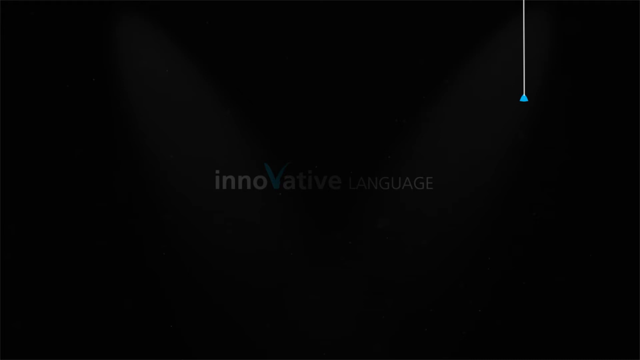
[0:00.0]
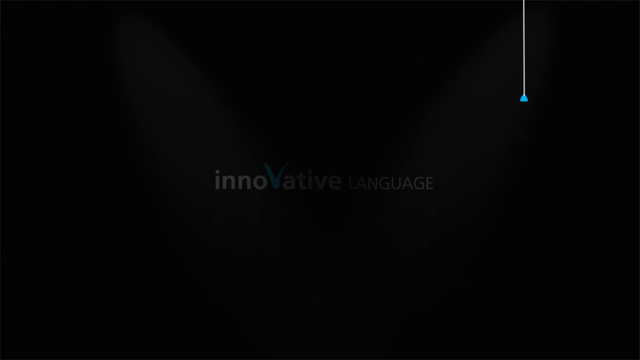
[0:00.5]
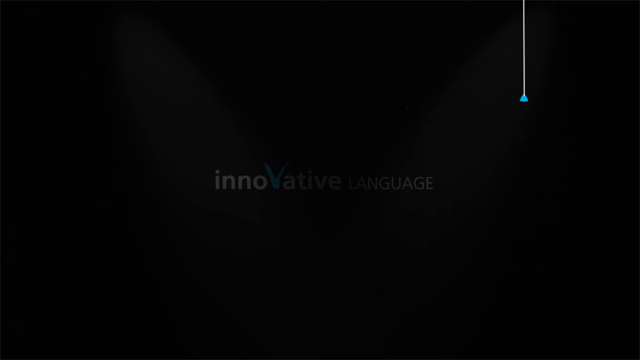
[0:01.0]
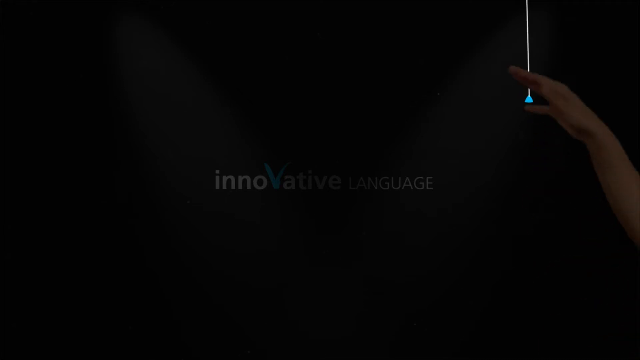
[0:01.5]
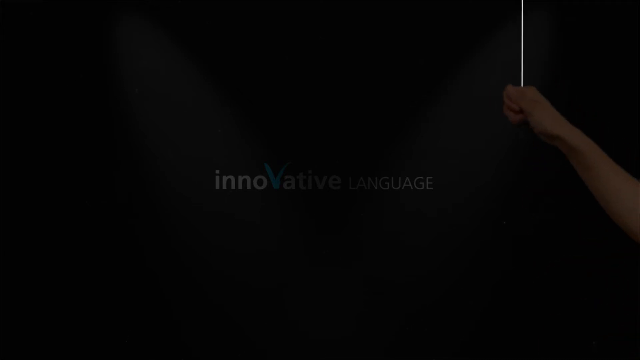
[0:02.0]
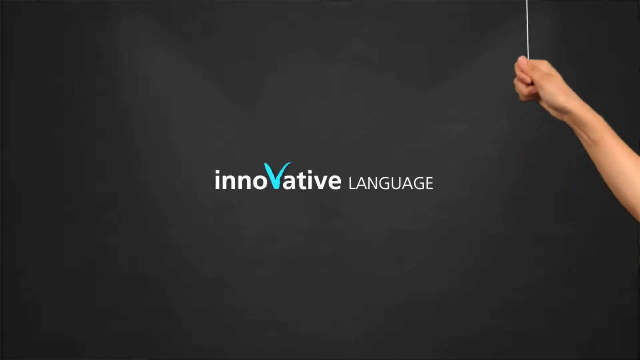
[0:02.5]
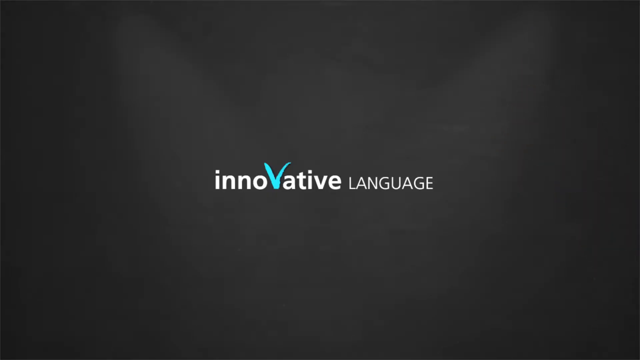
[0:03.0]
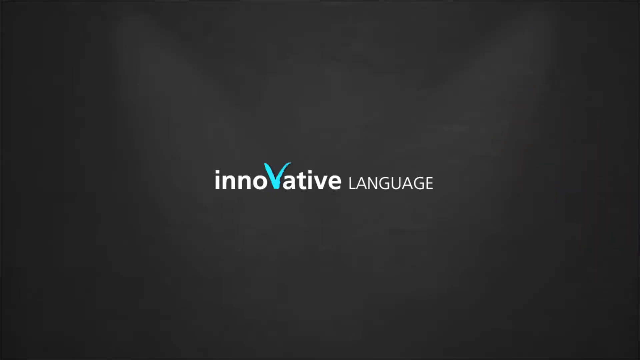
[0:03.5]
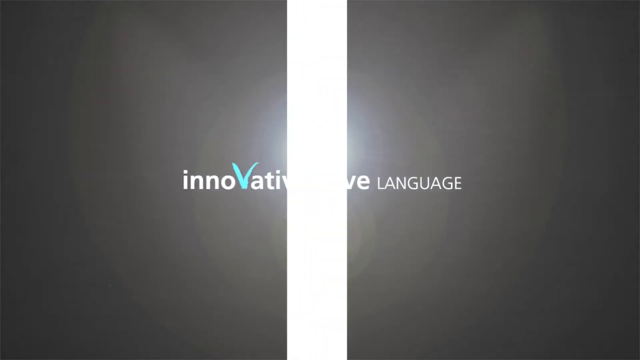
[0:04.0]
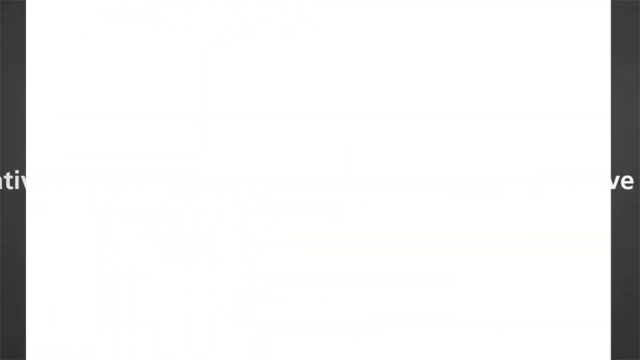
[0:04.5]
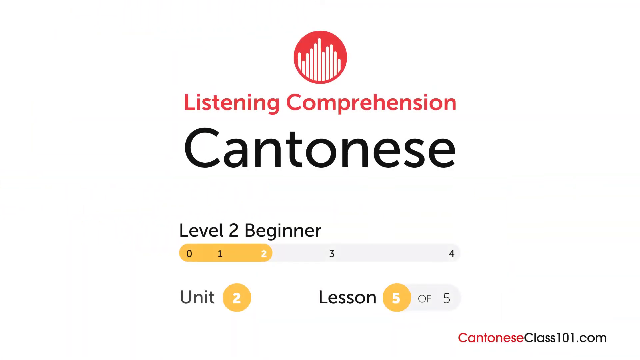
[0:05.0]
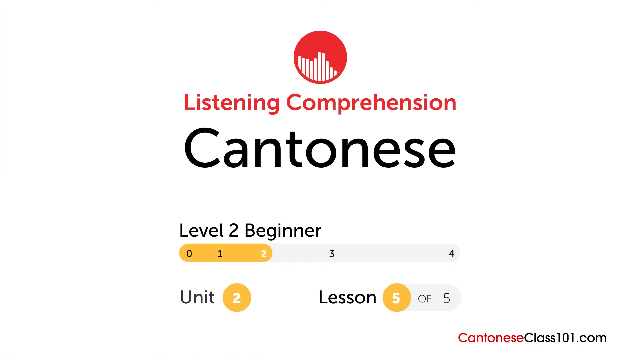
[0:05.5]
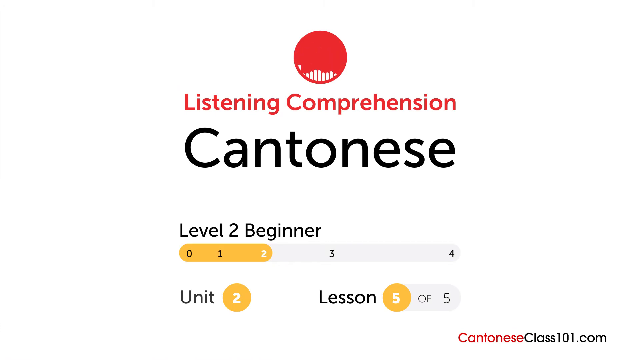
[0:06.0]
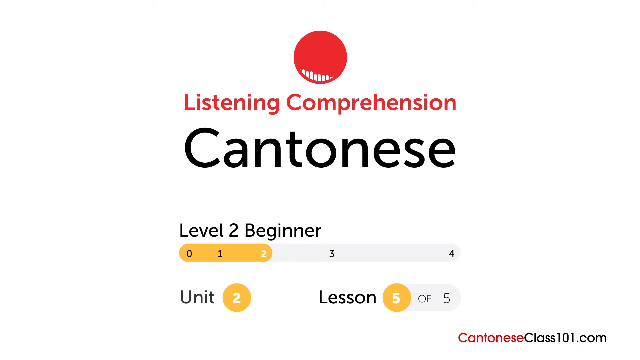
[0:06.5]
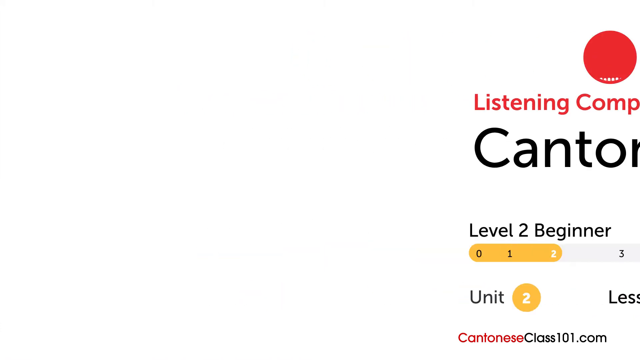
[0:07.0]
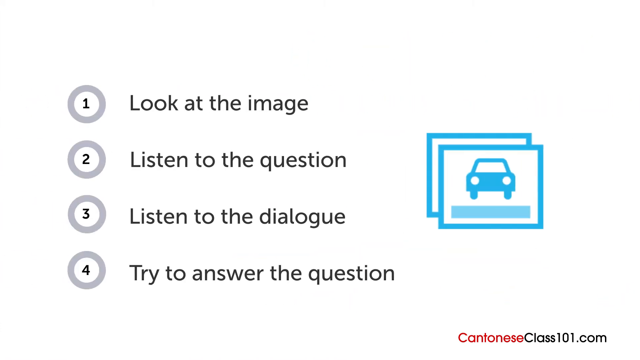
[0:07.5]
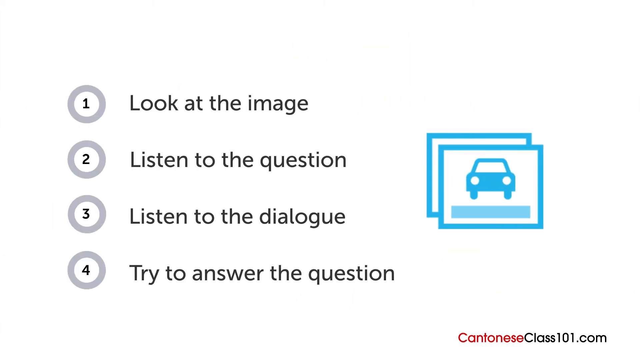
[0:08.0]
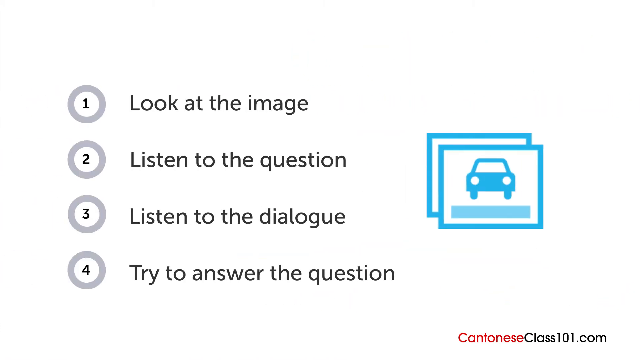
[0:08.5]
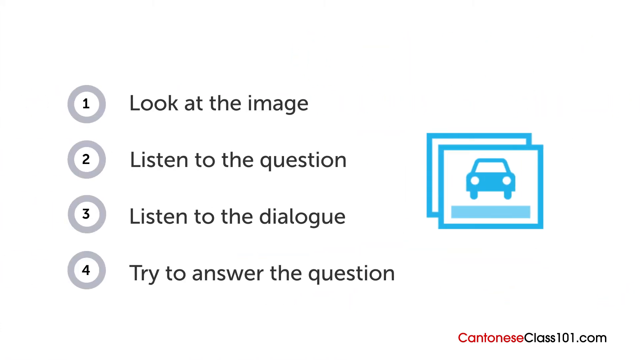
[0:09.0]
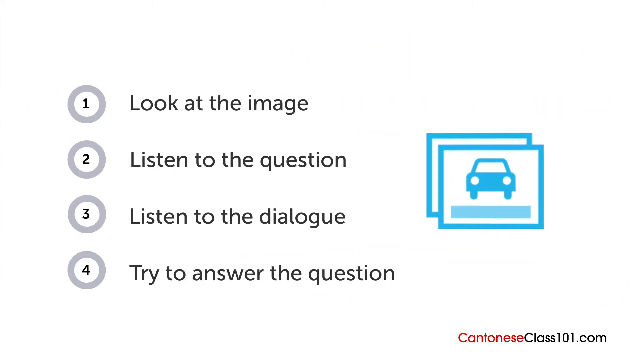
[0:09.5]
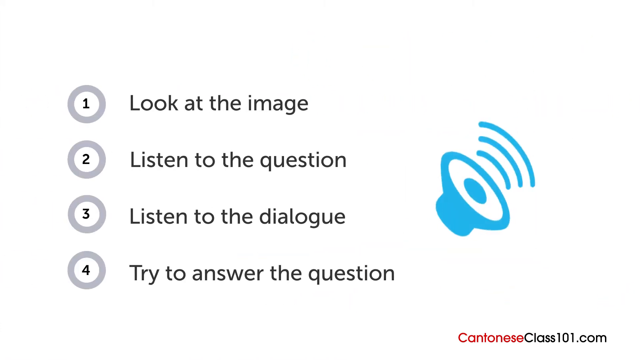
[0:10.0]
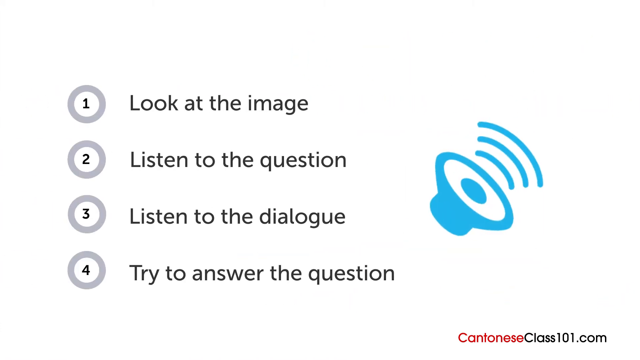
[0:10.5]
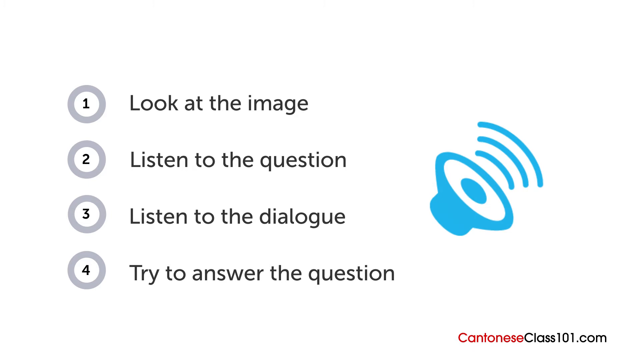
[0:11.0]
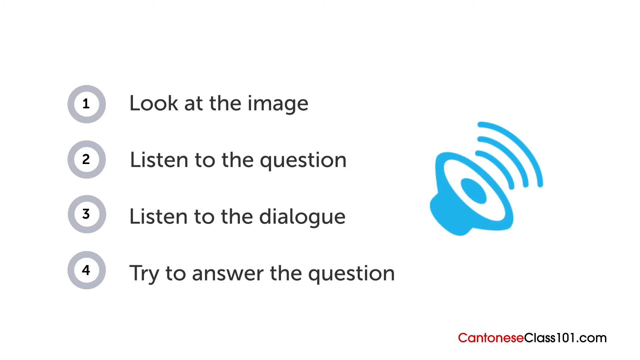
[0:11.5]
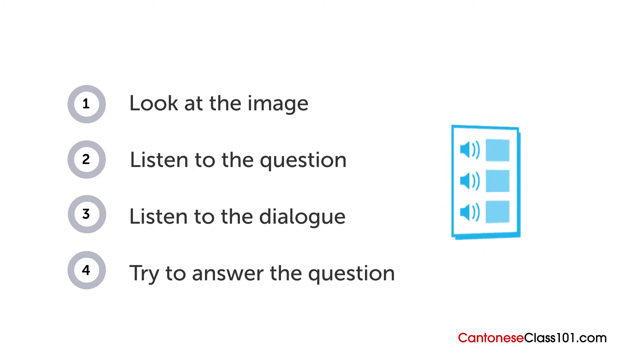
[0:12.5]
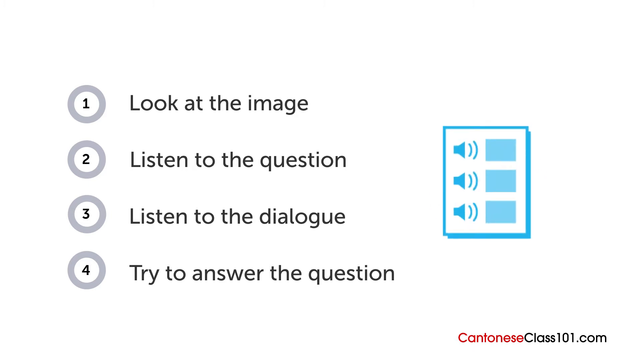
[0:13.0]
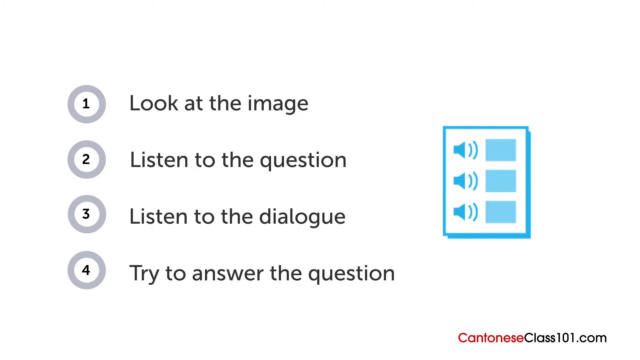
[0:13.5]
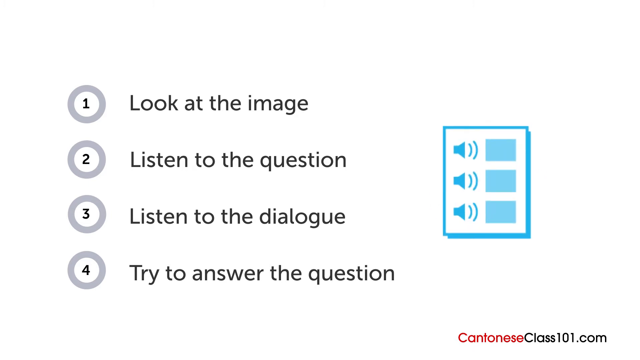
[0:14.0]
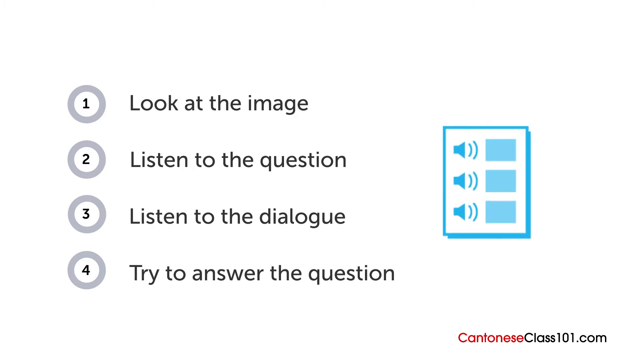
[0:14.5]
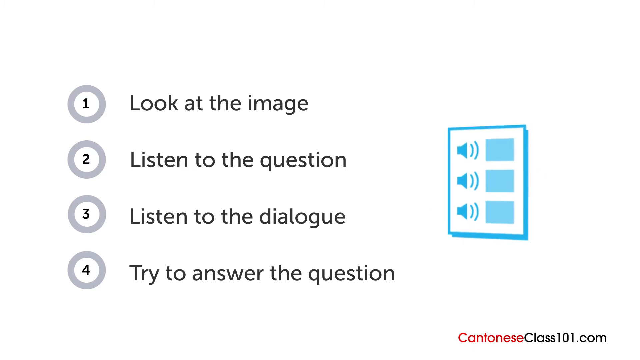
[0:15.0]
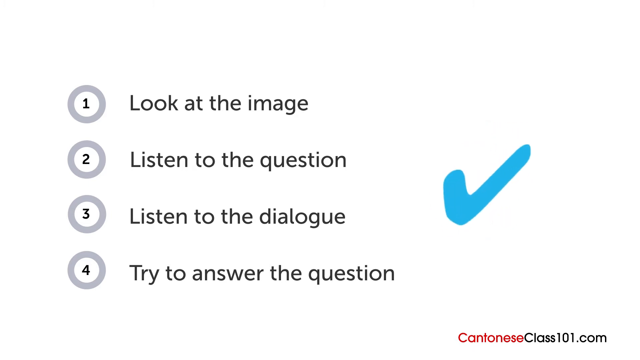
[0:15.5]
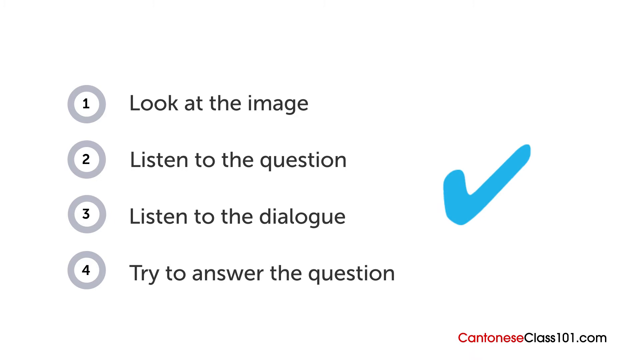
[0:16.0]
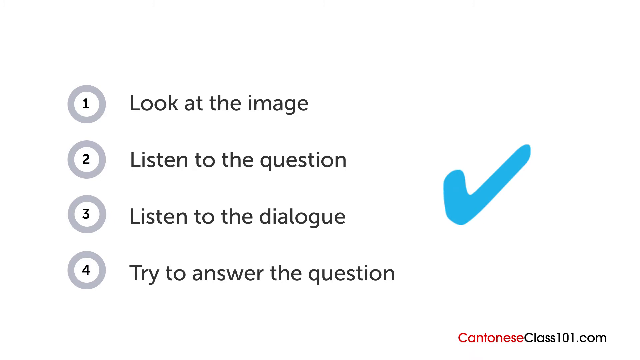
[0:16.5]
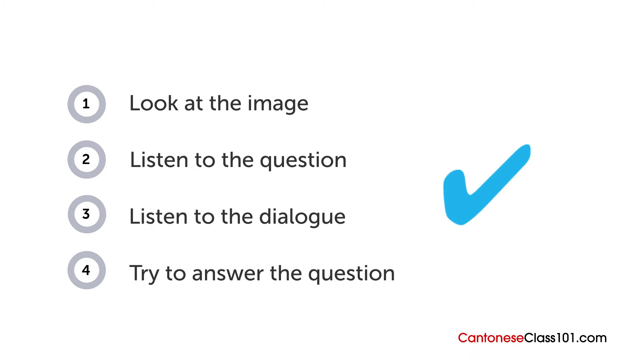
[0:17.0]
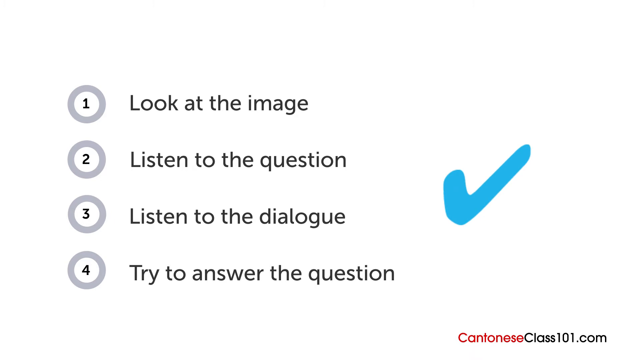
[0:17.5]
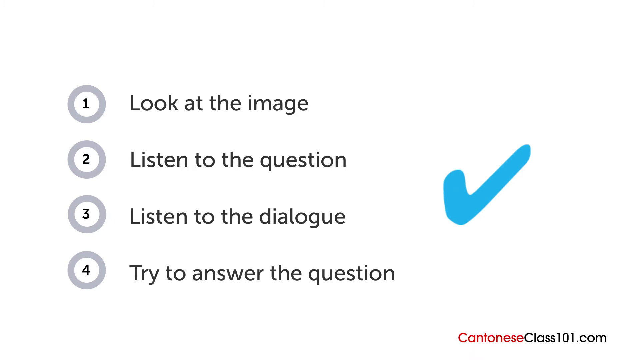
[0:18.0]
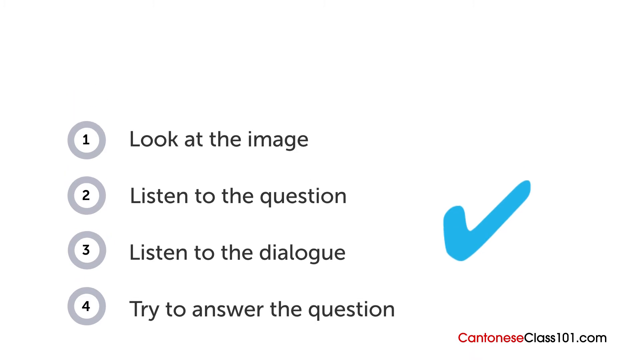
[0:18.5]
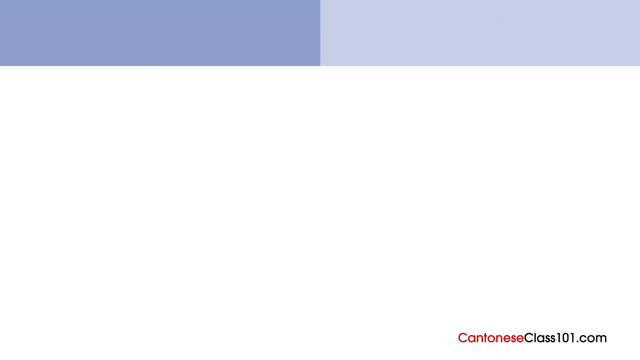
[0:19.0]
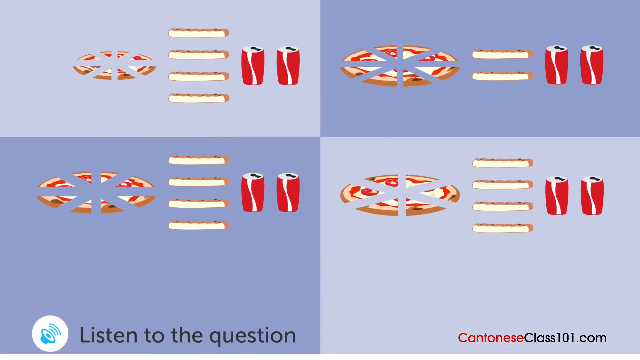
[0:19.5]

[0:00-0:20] The lights are off, then a hand suddenly pulls a string and a light comes on. A logo appears reading "Innovative Learning." A door opens, and another logo reads "listening comprehension Cantonese." The screen indicates level 2 beginner, unit 2, and "lesson 5 of 5." Four instructions follow: "look at the image," "listen to the question," "listen to the dialogue," and "try to answer the question." Some logos appear on the right side of the screen, apparently representing the different steps. Four different images then appear, which look like pizza and cool drinks.